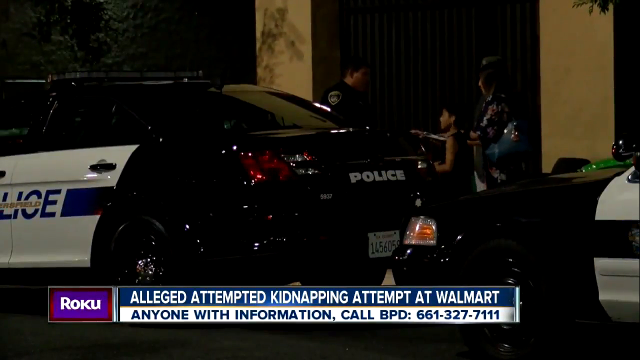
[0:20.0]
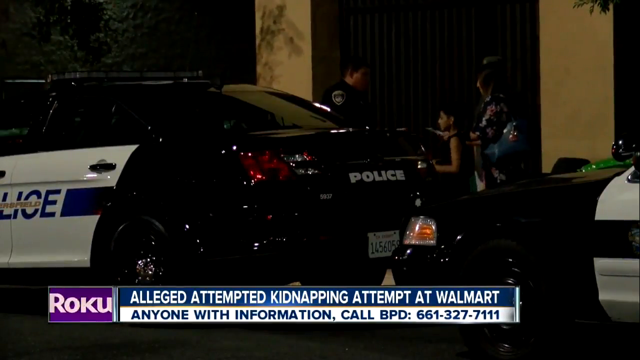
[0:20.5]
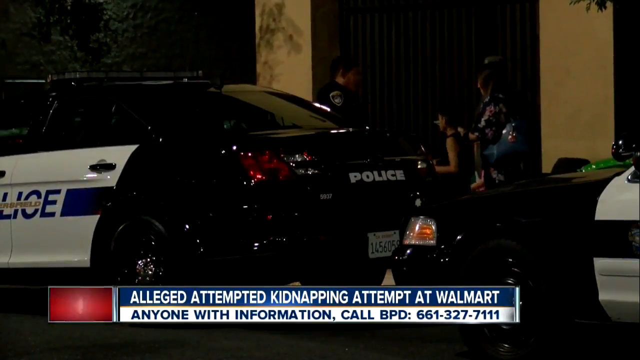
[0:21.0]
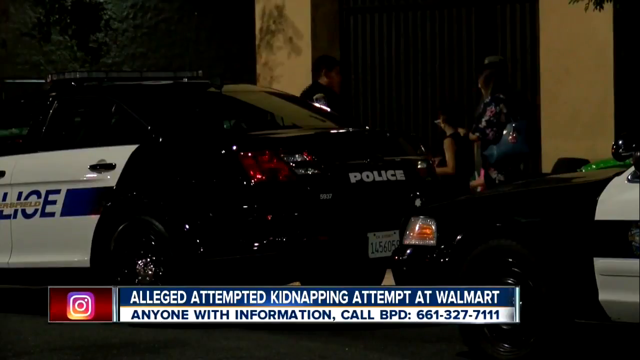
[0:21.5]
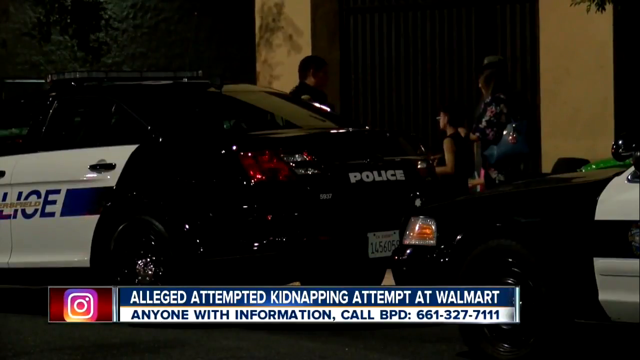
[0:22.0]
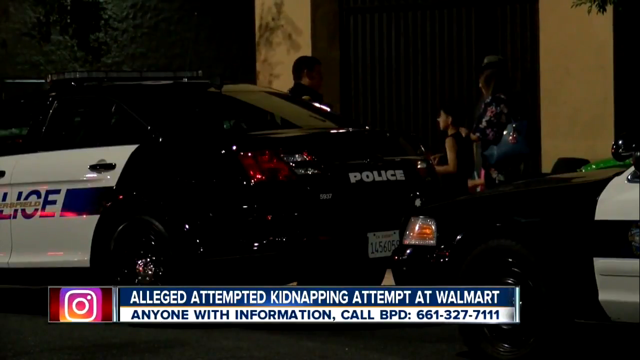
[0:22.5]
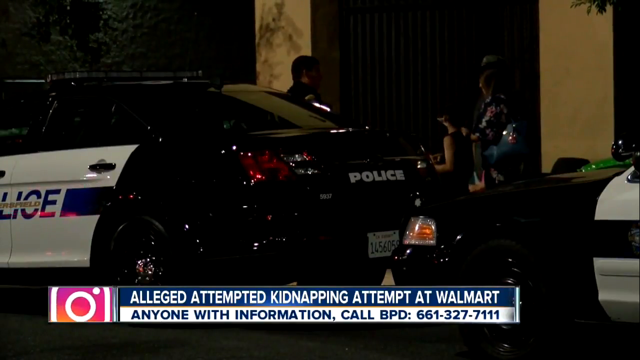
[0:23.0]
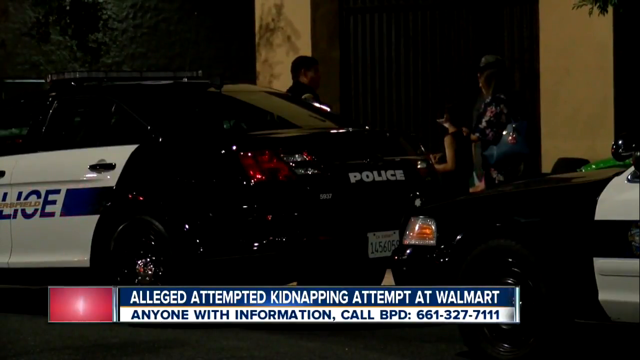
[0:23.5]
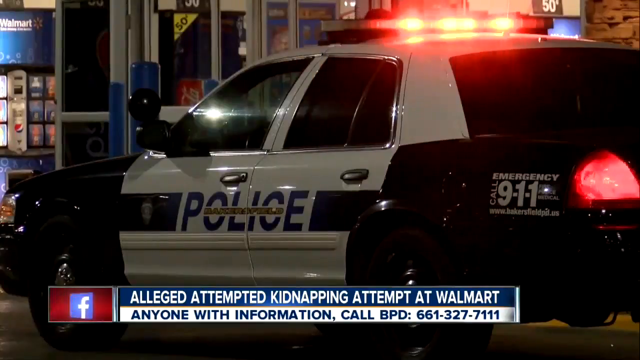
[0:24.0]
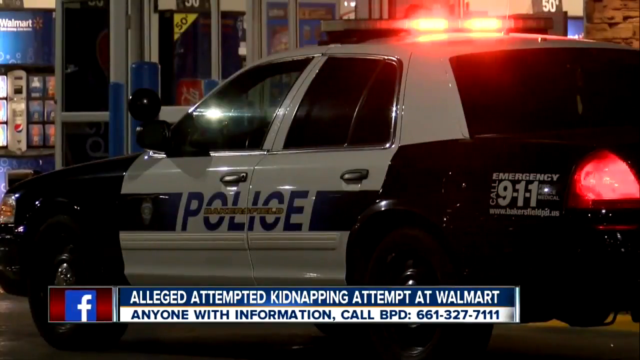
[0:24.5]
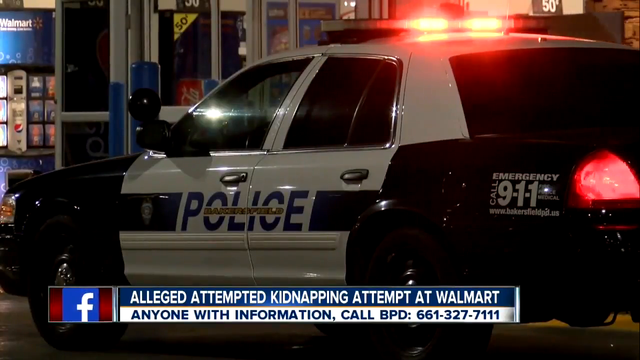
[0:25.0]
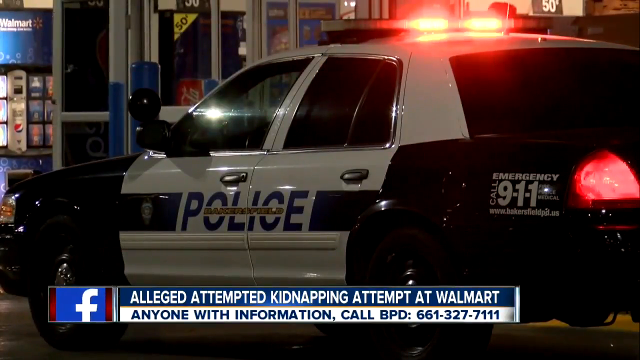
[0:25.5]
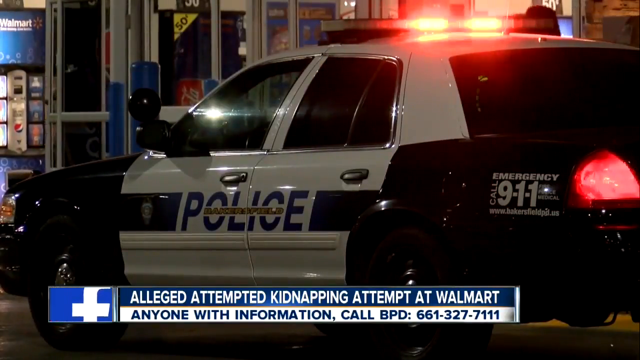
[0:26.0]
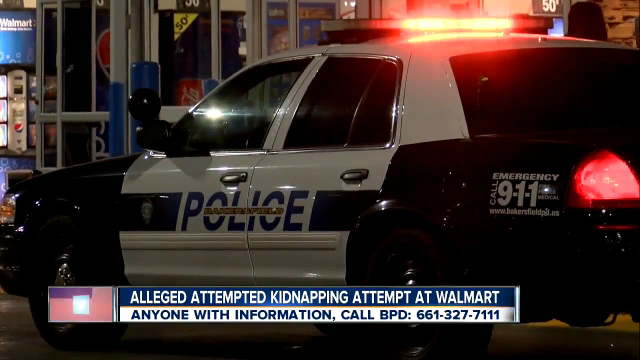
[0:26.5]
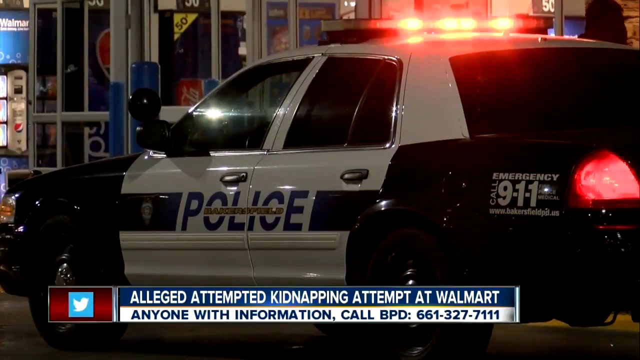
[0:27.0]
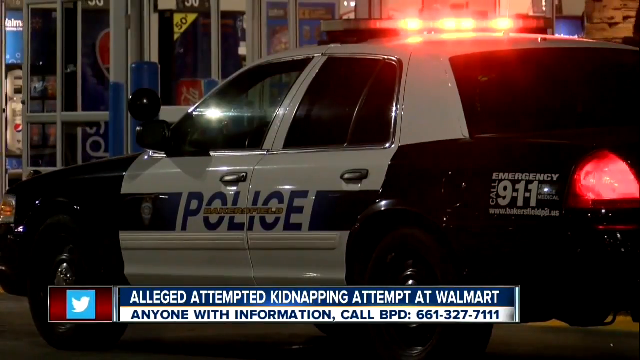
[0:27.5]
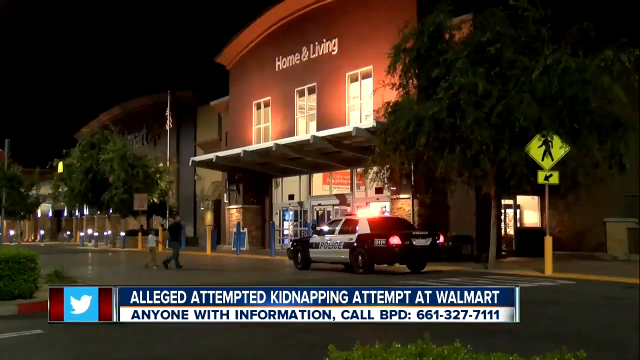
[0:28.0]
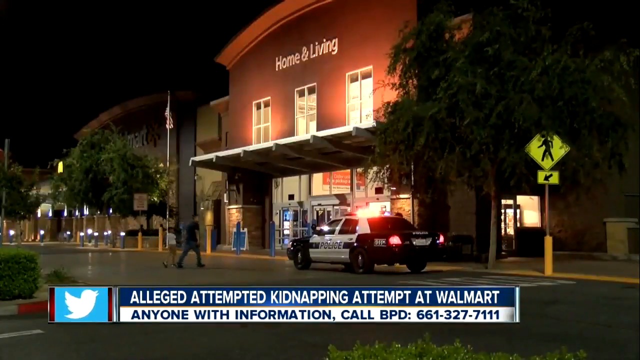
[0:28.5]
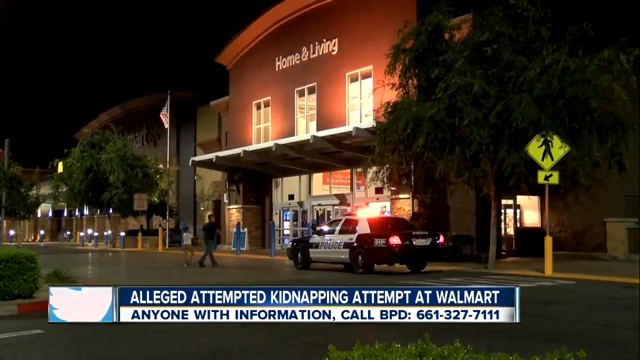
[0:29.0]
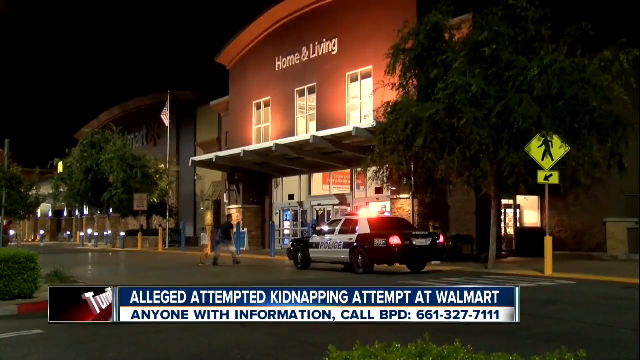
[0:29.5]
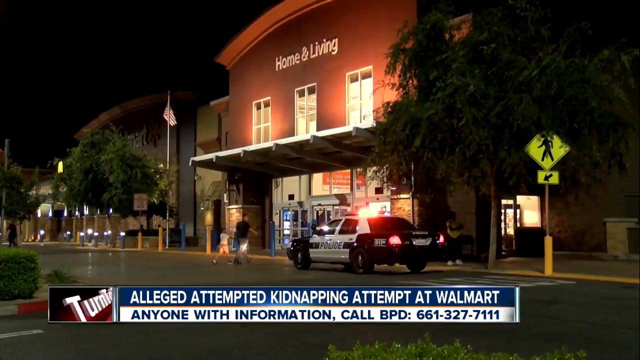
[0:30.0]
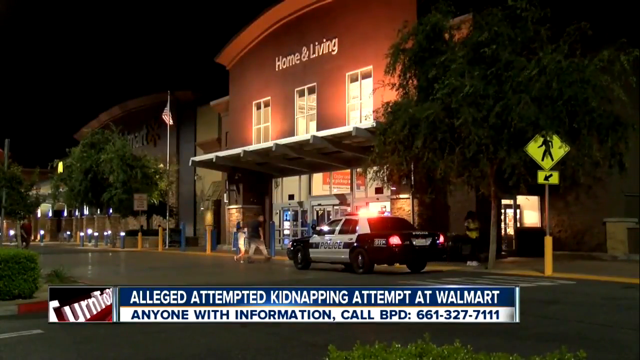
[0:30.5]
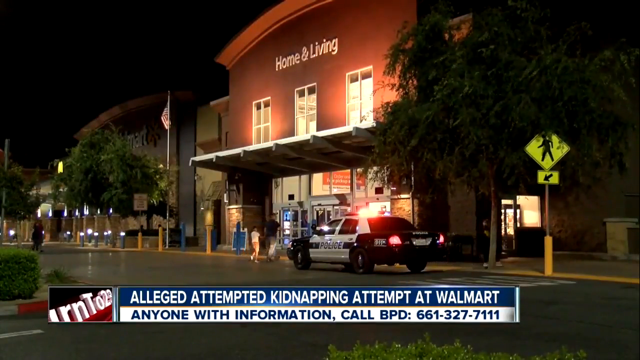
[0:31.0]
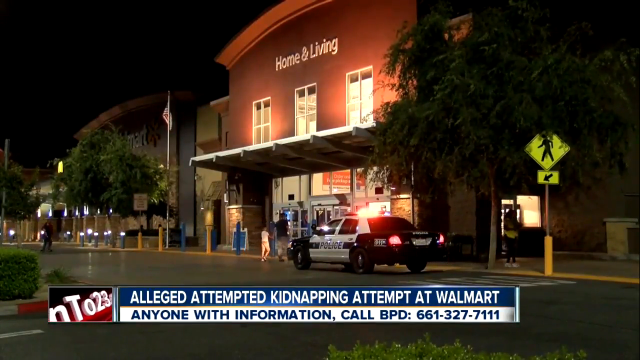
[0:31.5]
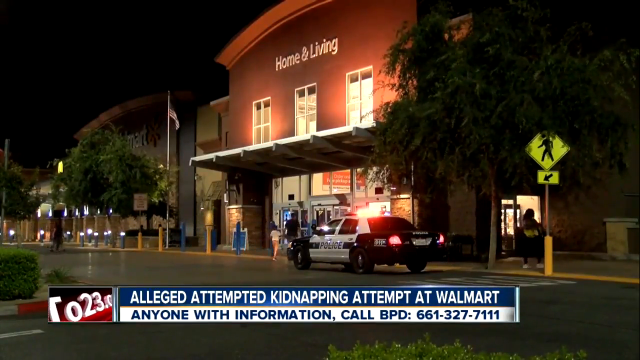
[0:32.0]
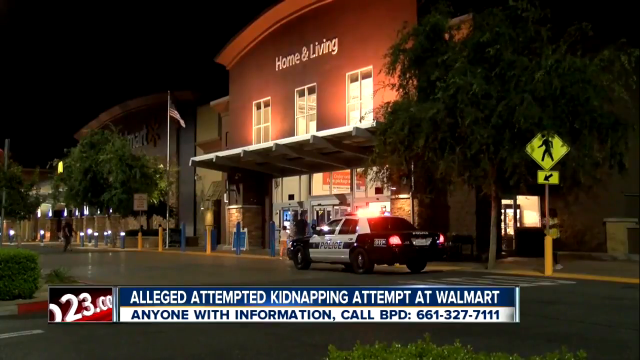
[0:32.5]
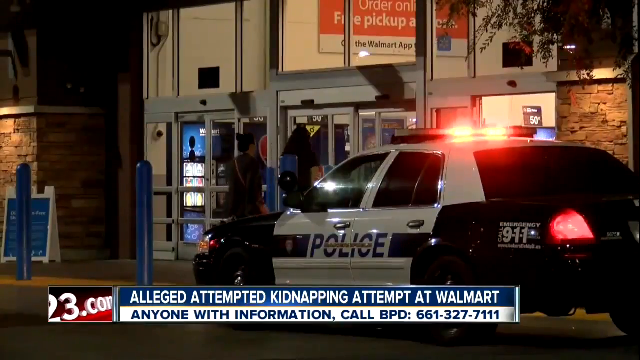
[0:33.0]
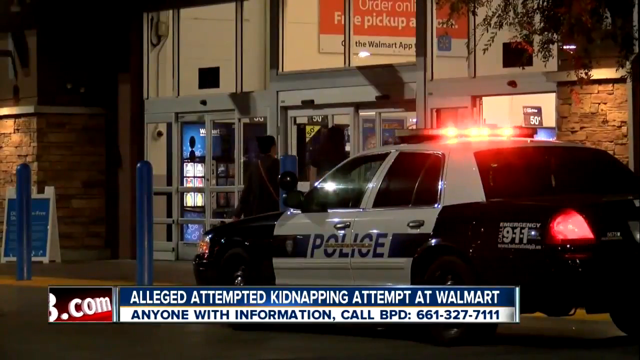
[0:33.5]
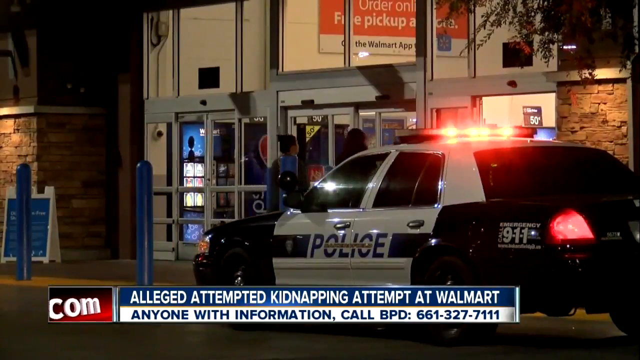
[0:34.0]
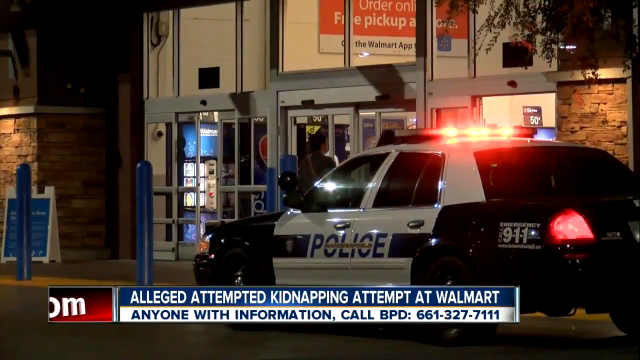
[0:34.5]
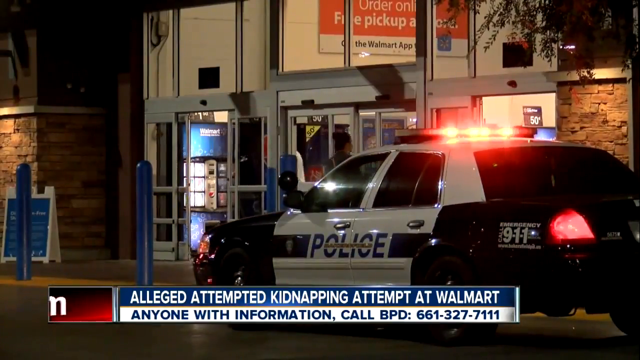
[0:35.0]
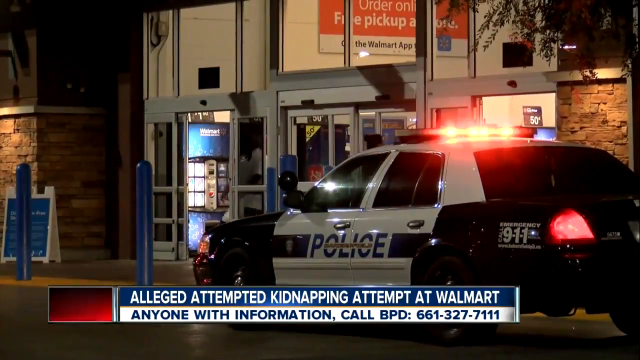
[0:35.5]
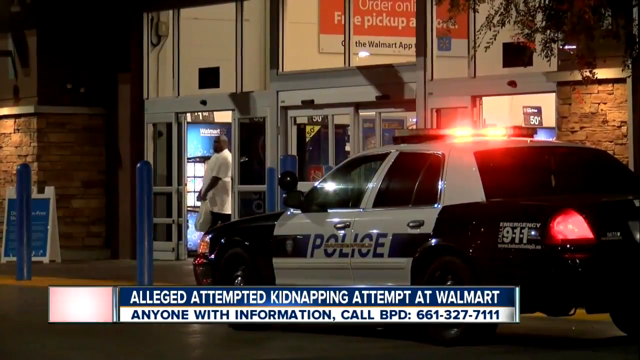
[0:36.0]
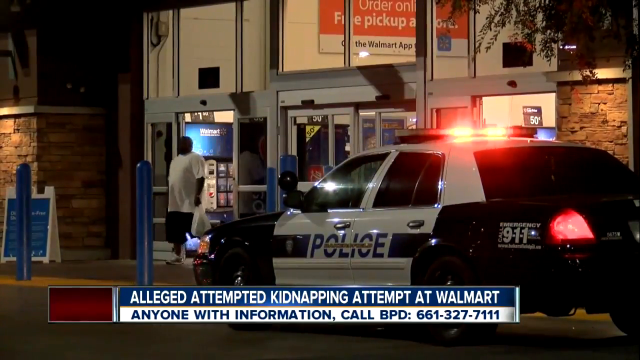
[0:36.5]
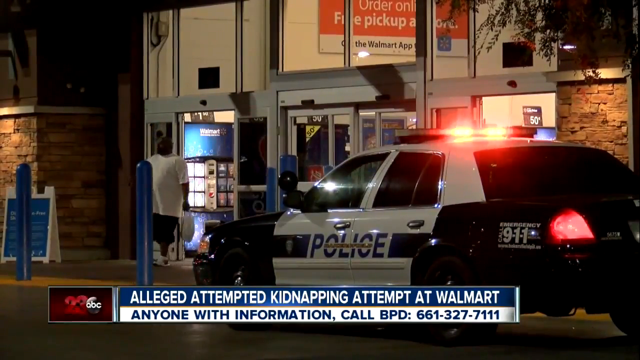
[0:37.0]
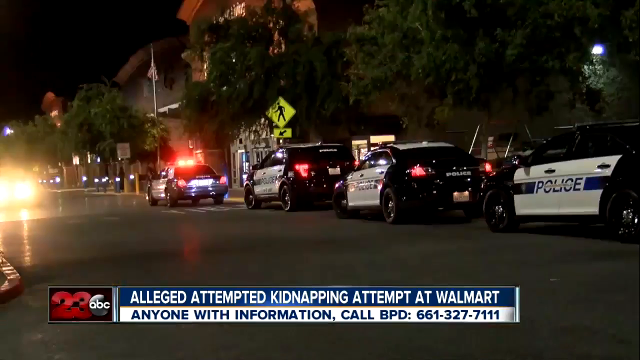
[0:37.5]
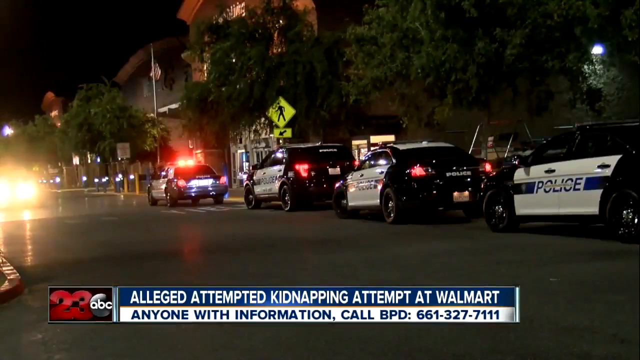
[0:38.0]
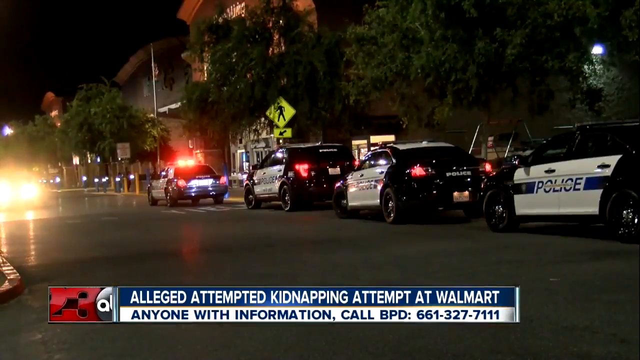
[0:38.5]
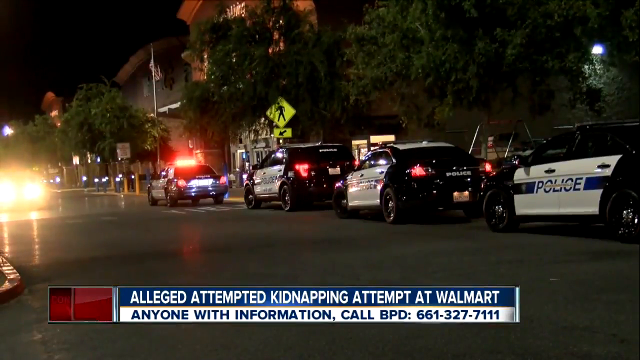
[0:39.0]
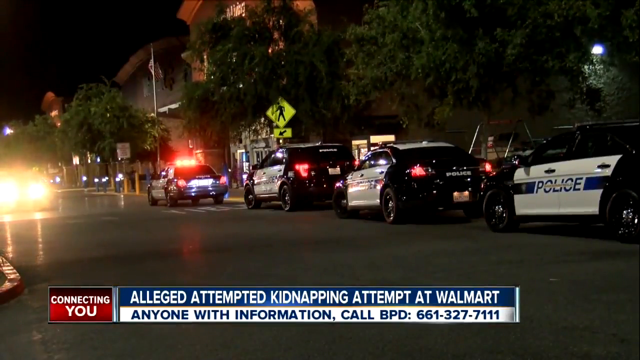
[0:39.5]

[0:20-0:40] The police talk to a child and a woman who looks like his mother; the child is apparently the one involved in an attempted kidnapping at the Walmart. The police go over the details as they run their investigation. A long line of police cars lines the streets with their lights flashing, and a police car is out front of the Walmart while customers go in and out of the store. The report is on 23 ABC News. Palm trees are visible, suggesting the location may be California or Florida. An advertisement for Roku appears in the bottom left-hand corner.